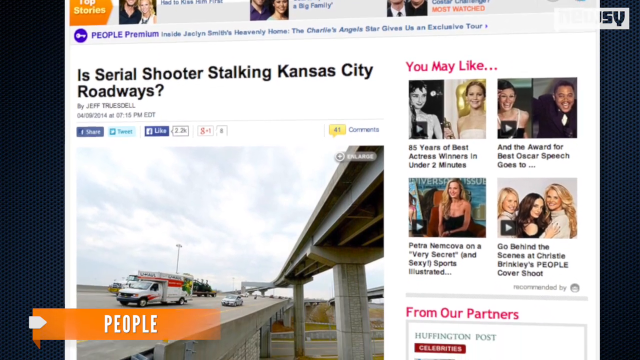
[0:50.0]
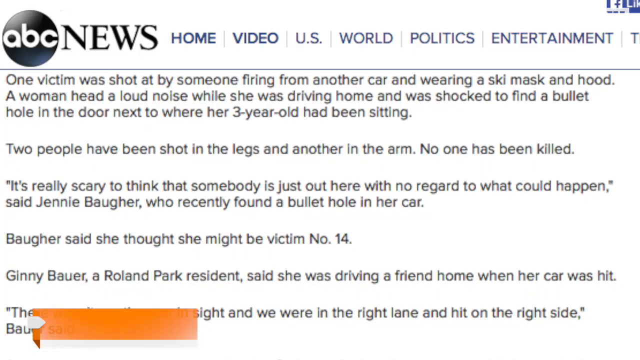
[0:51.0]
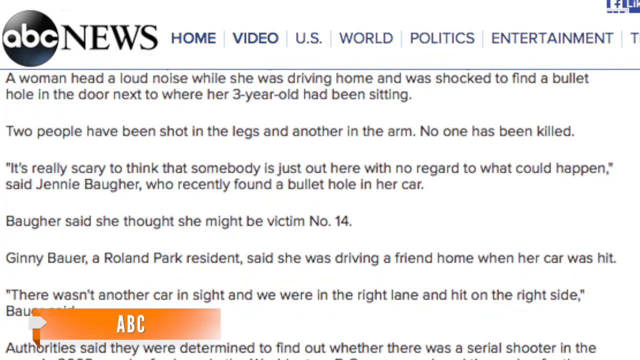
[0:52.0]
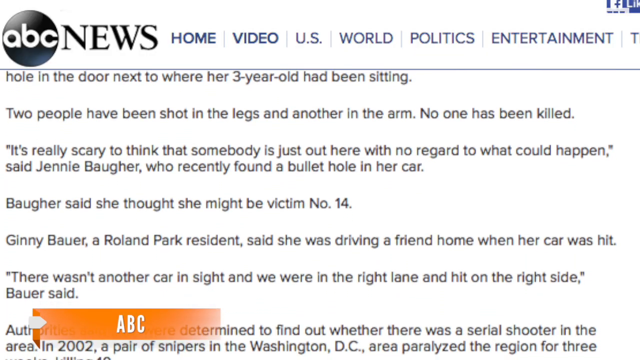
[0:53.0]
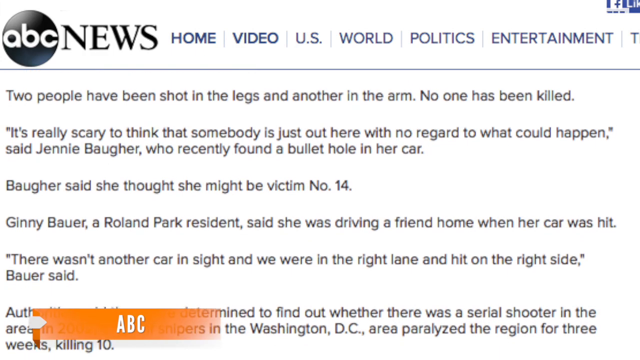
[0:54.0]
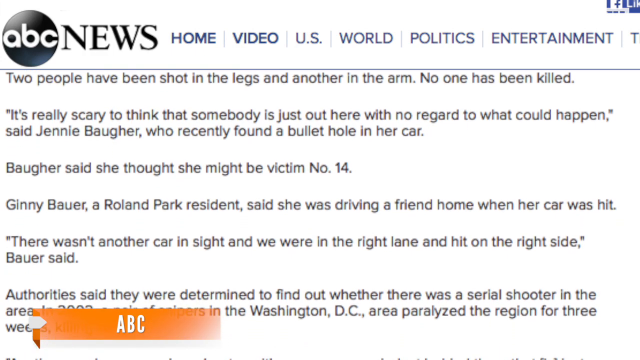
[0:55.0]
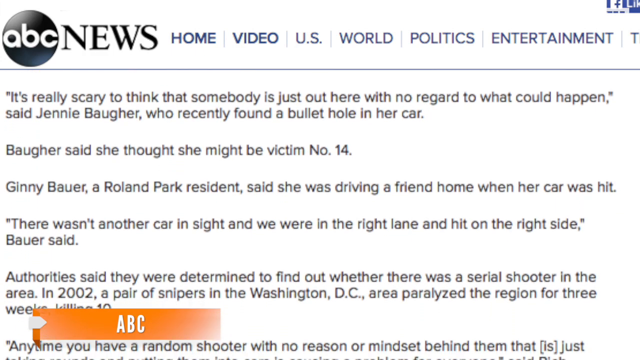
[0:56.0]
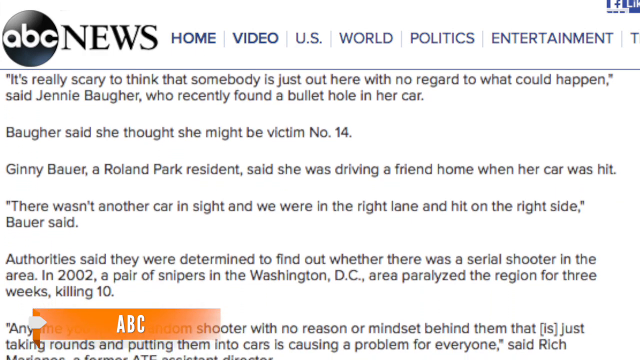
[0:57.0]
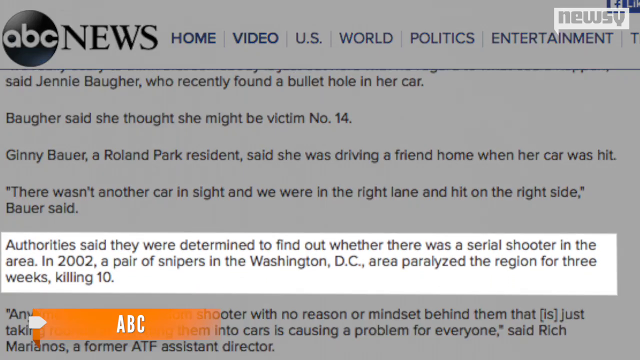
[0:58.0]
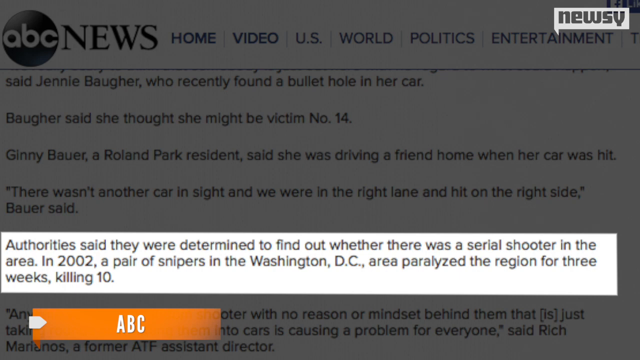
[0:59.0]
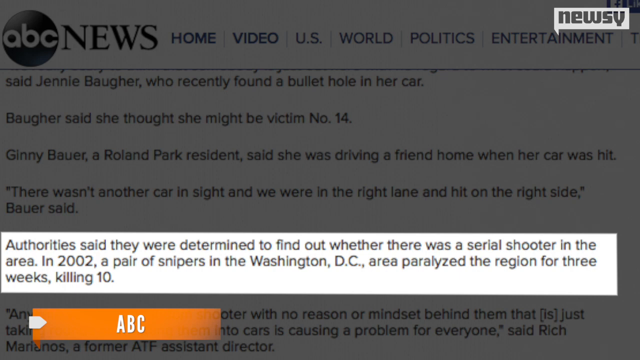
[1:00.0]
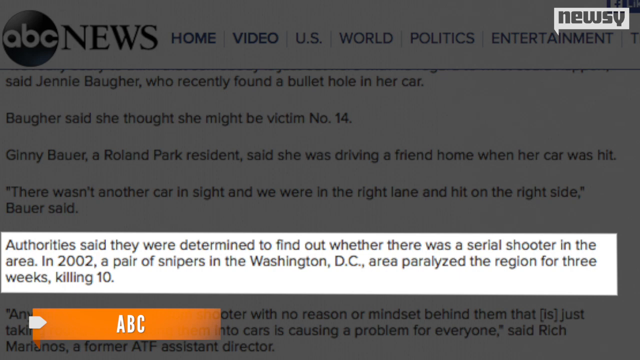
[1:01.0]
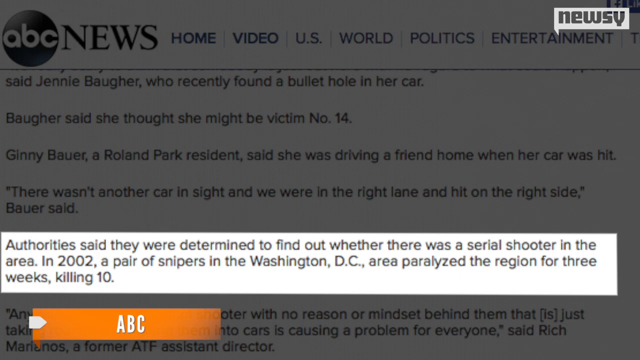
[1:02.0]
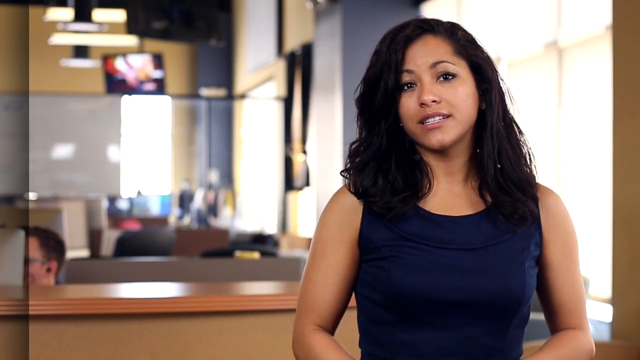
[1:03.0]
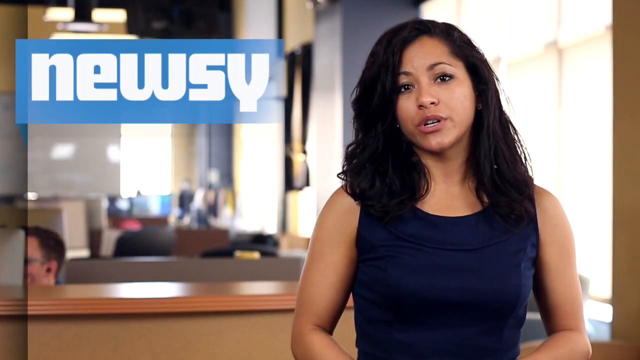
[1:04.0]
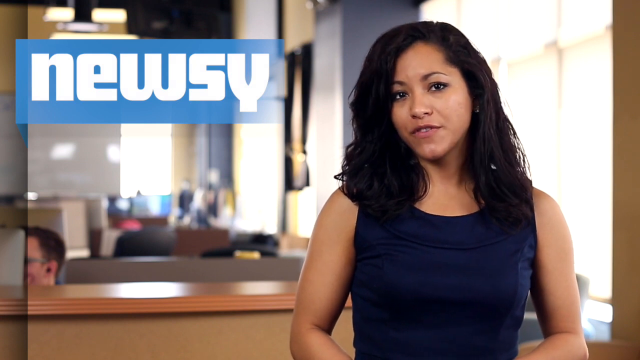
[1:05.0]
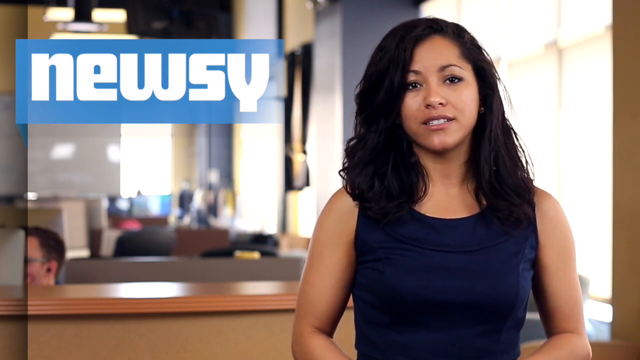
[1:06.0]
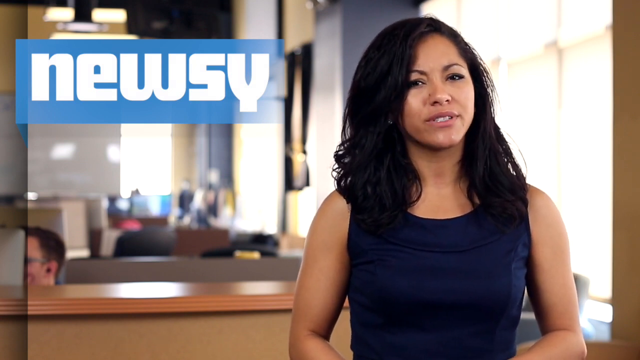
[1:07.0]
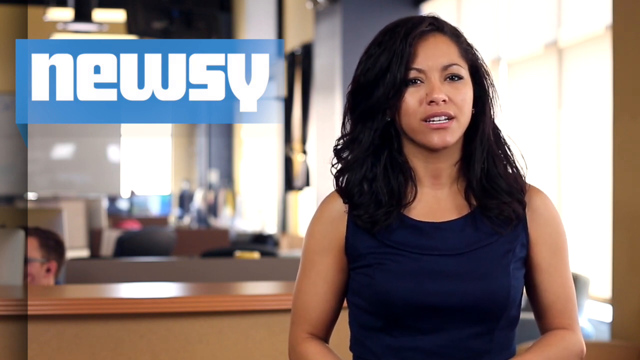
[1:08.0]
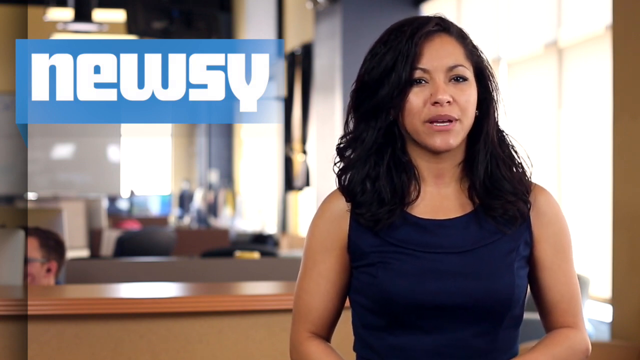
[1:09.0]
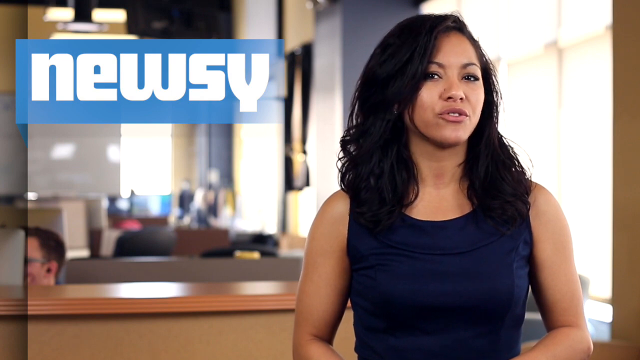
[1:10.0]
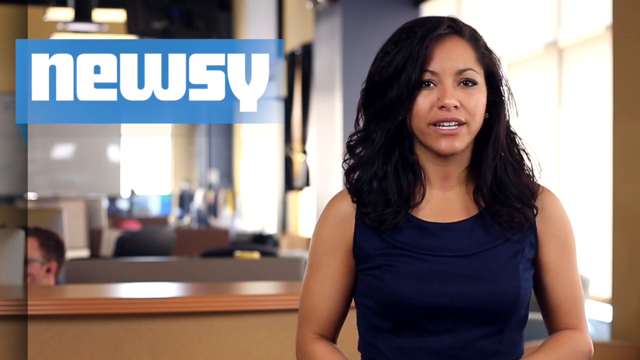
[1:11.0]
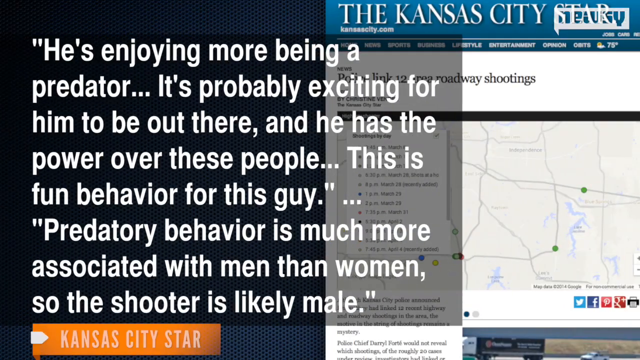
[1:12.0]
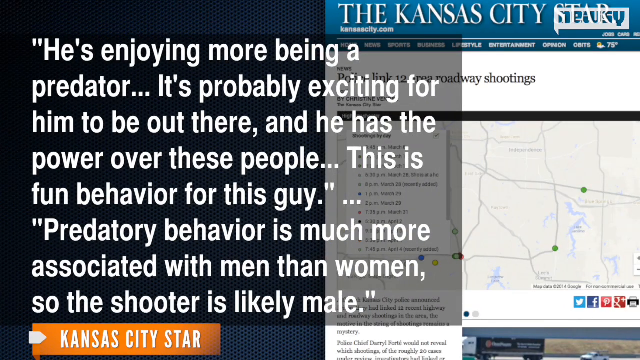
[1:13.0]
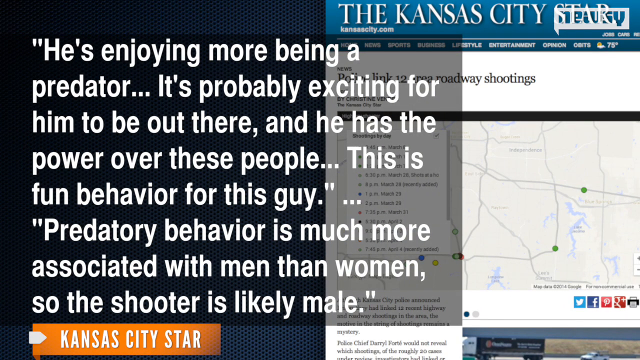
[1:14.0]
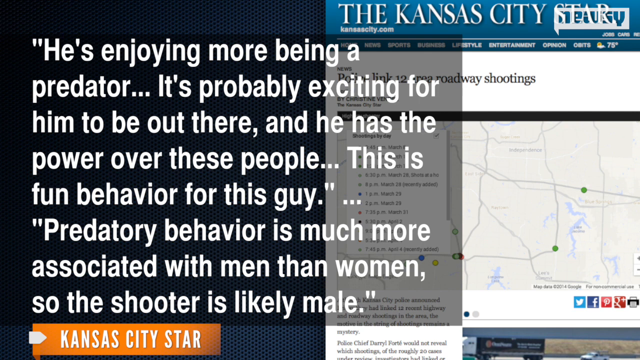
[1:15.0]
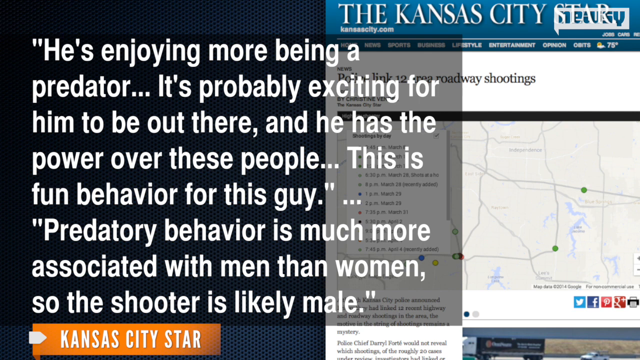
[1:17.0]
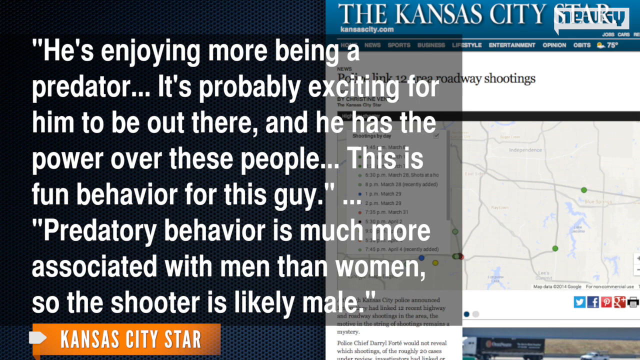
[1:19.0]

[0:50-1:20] The coverage of at least a dozen linked highway shootings continues with the article, whose name appears to be "people," headlined "Is serial shooter stalking Kansas City roadways." Other adverts appear on the article page, along with a picture of an ambulance on the highway. The article text describes a victim shot at by someone wearing a ski mask and a woman who found a bullet hole in her car door next to where her three-year-old had been sitting. It reads "two people have been shot in the legs and another in the arm, no one has been killed," includes a quote from Jenny Berger, who recently found a bullet in her car, and says "Berger said she thought she might be victim number 14." It also states that authorities "were determined to find out whether this was a serial shooter in the area" and mentions snipers in the Washington, D.C. area in 2002 who "paralyzed the region for three weeks, killing 10." The broadcast then returns to the newsroom, where Jasmine is on the same side of the screen wearing the same blue attire.